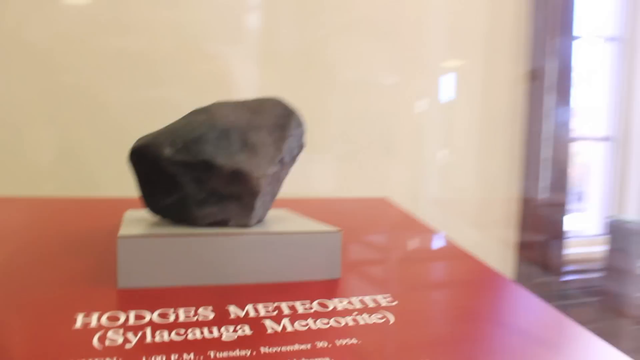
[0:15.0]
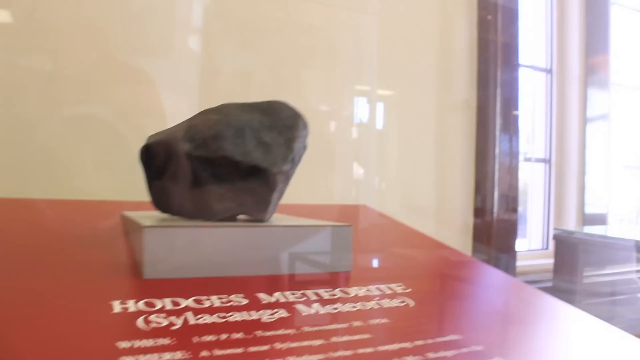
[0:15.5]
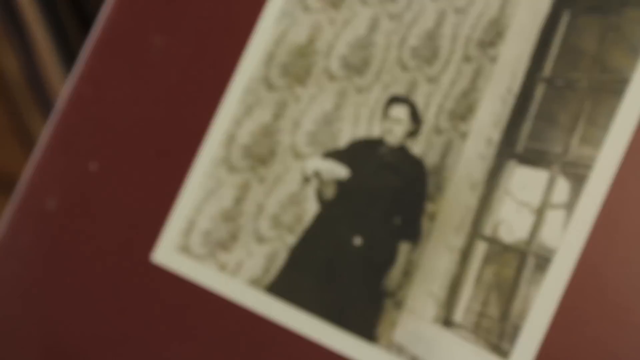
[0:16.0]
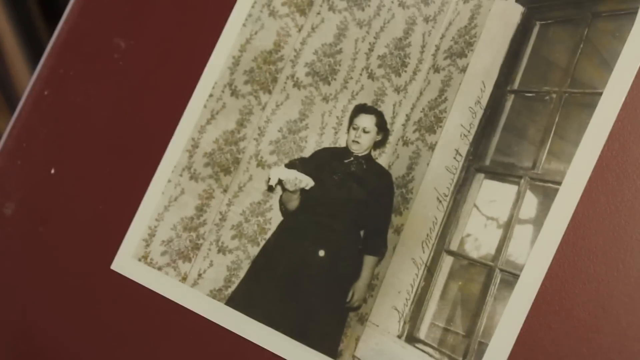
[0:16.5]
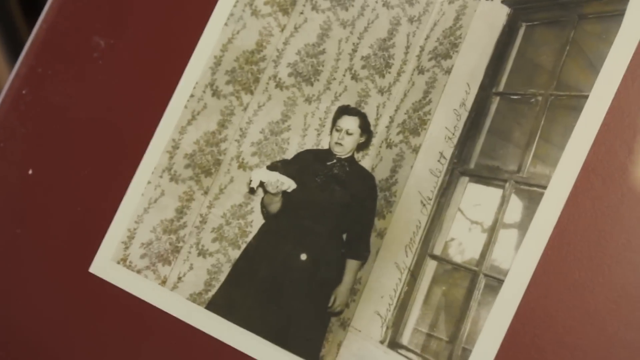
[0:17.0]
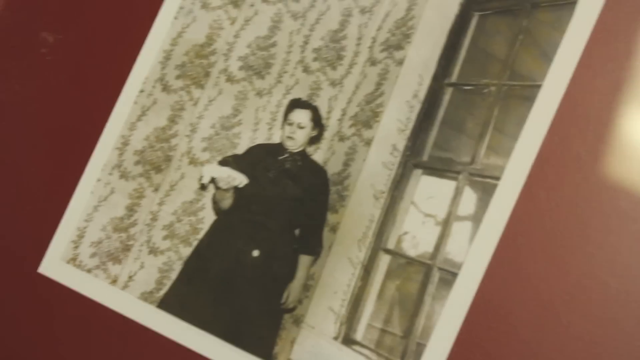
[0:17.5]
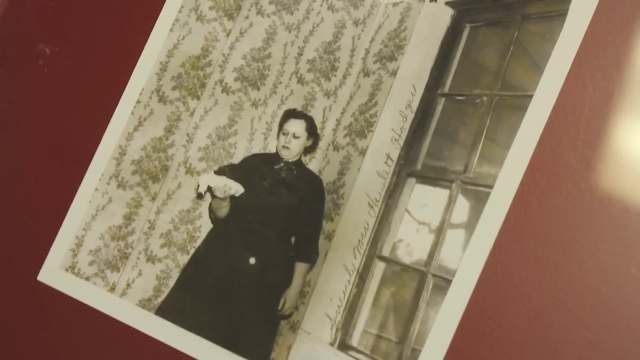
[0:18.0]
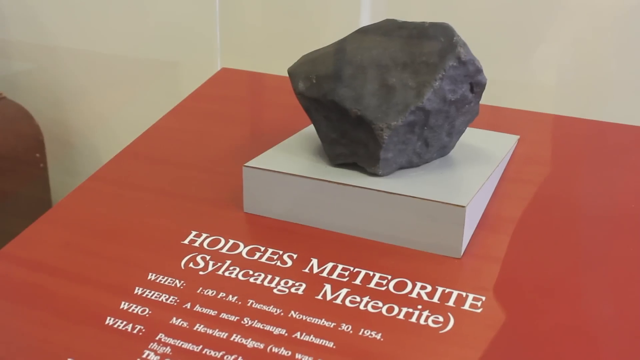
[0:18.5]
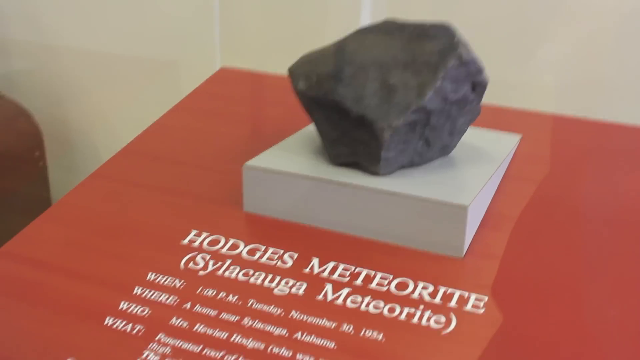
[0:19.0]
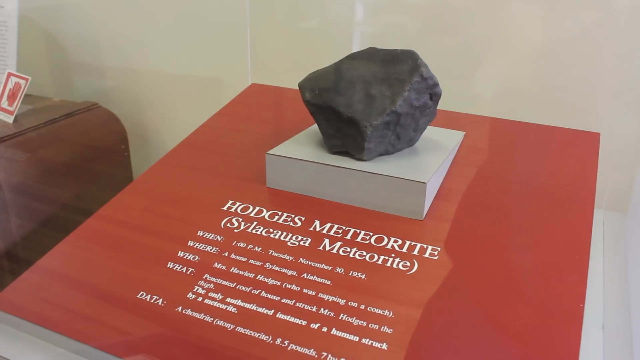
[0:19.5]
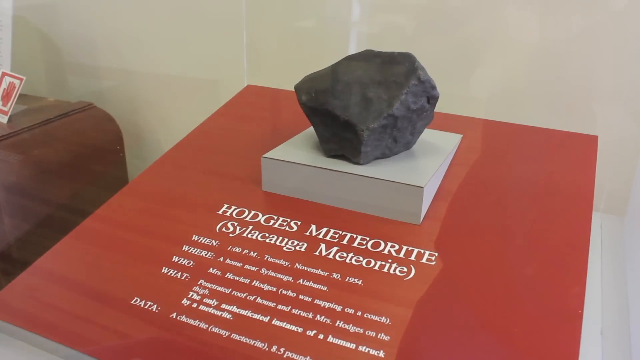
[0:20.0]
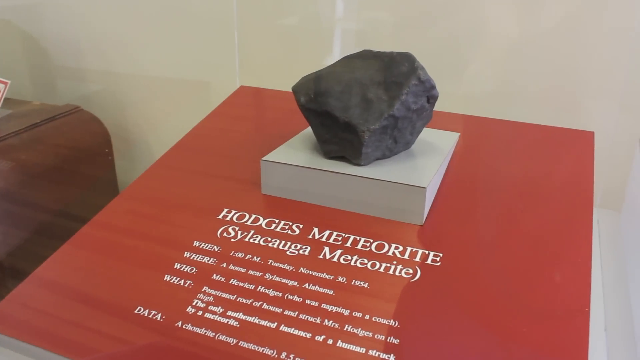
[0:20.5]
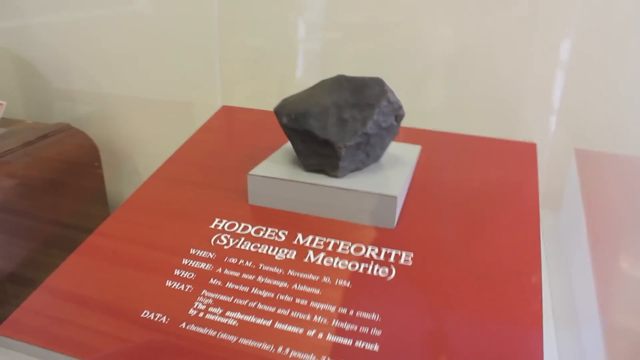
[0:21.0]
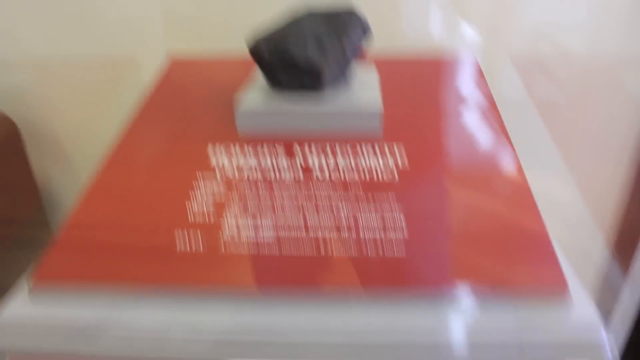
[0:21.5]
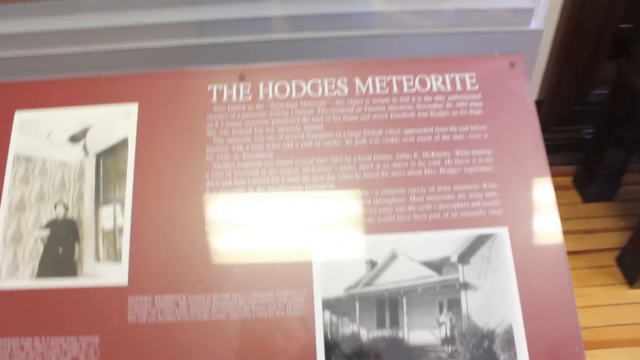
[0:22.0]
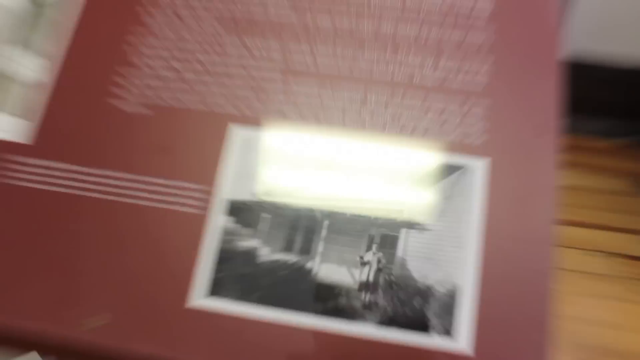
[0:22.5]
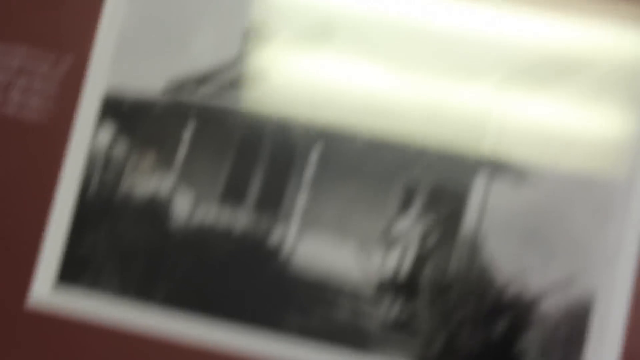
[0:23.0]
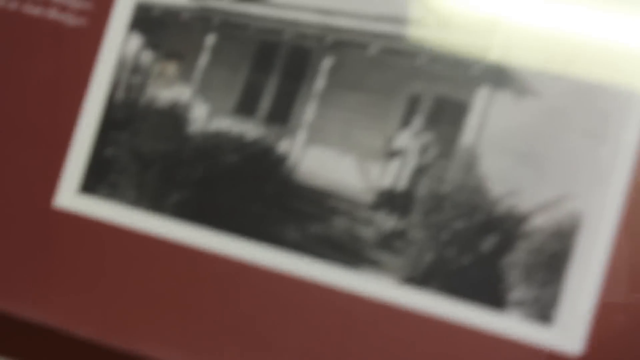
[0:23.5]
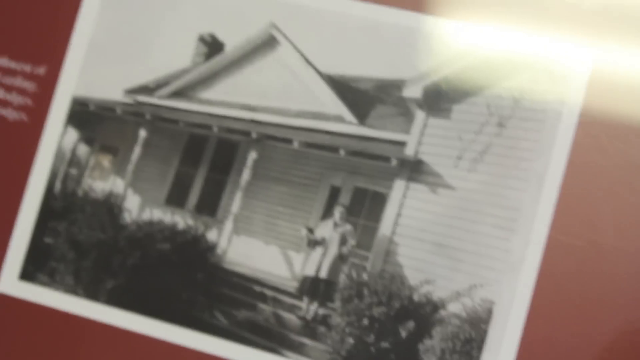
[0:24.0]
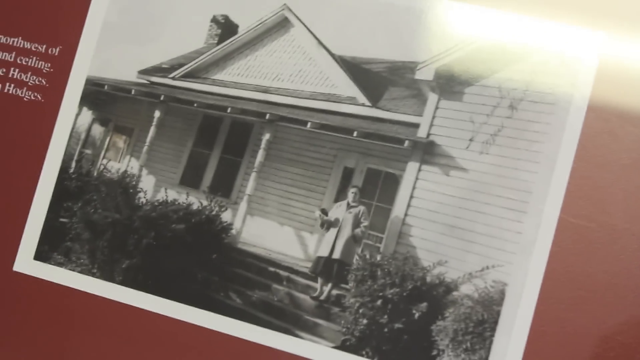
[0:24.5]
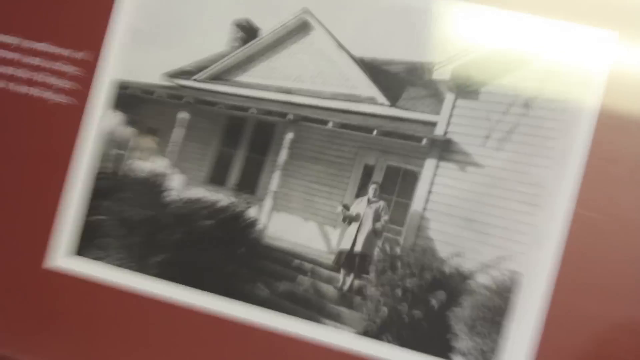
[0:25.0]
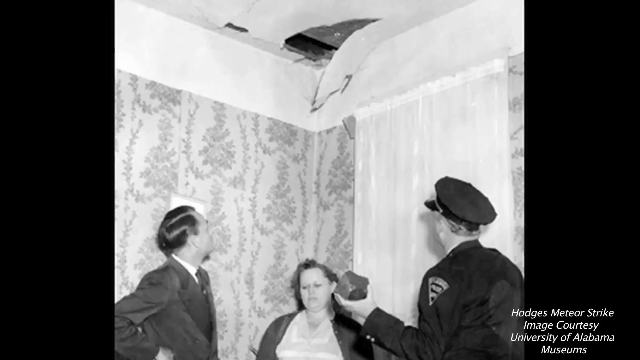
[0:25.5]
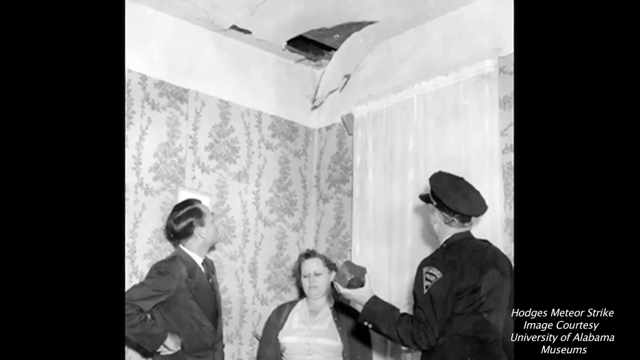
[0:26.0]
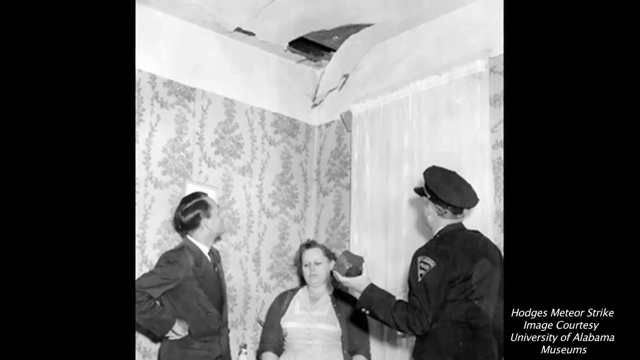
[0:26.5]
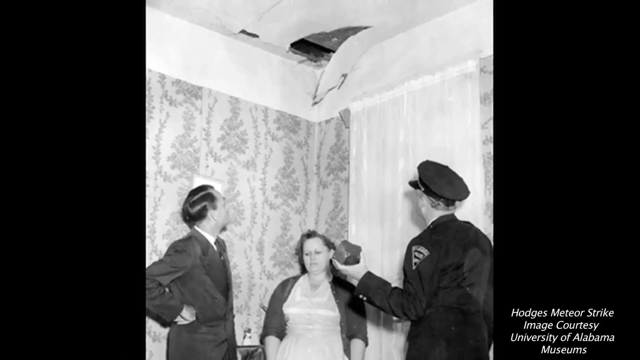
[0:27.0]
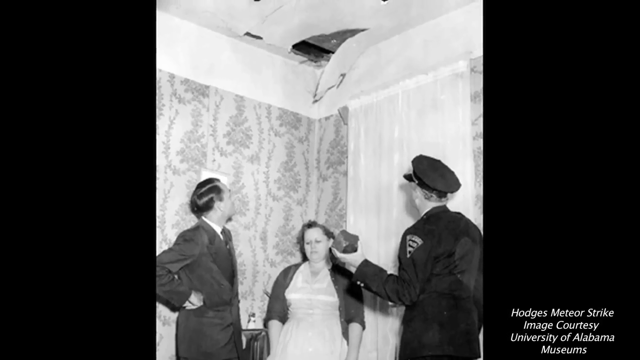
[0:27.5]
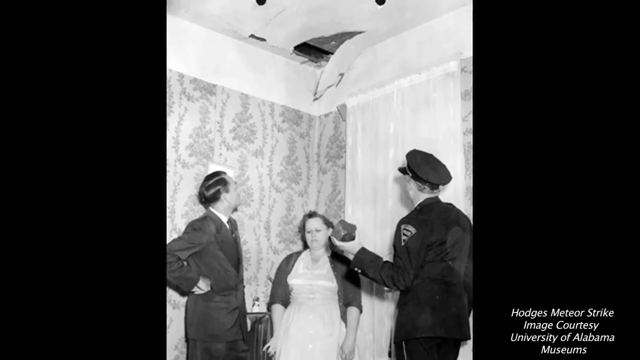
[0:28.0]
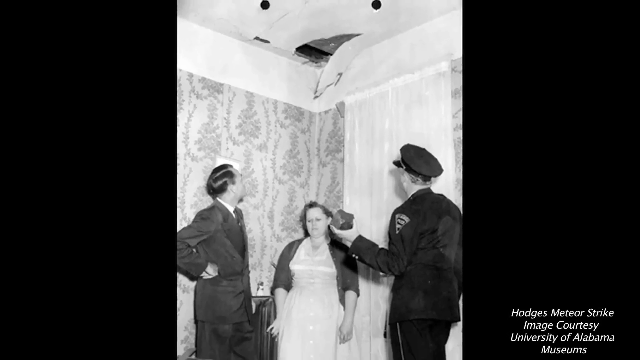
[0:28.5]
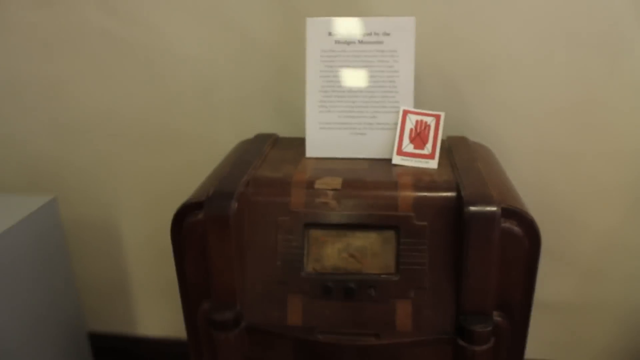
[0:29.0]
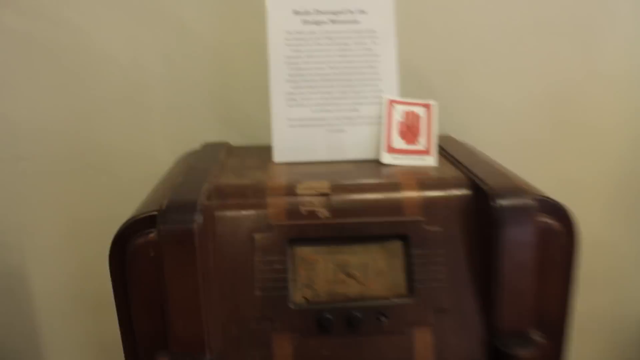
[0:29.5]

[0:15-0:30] Something in the sky is shown for a moment, followed by a photograph of a woman, then the rock, and a photograph of a house. Another photograph shows a hole in the ceiling, a woman, and somebody holding the rock. The picture of the woman appears again, then the rock, then a photograph of a house with the woman in front of it, and then the inside of the house with a hole in the ceiling. It appears to go back to the woman, the rock, and the photo of the house, and the photo of the inside apparently shows a policeman and one other man, with the policeman holding the rock. After the inside of the house, the rock is shown again, presumably the meteor that flew through the roof of the house, and the sequence kind of keeps repeating.